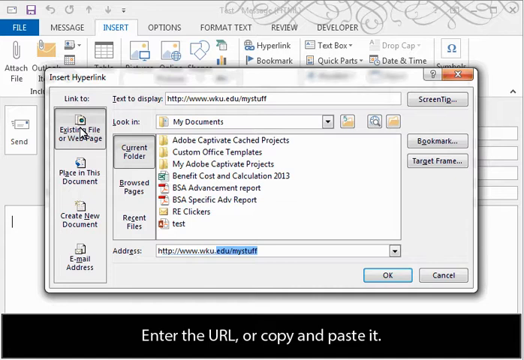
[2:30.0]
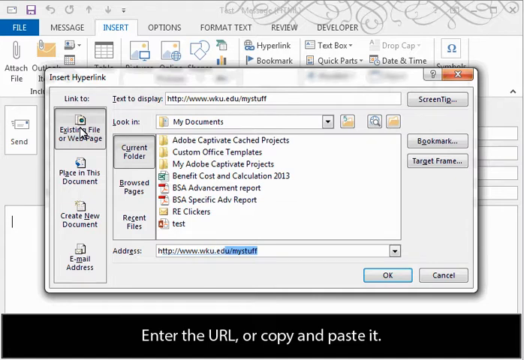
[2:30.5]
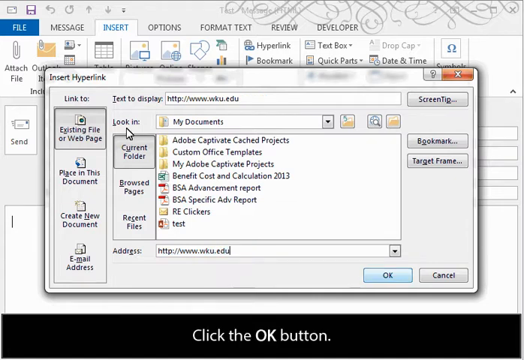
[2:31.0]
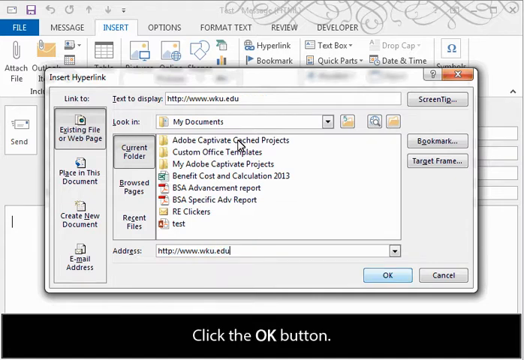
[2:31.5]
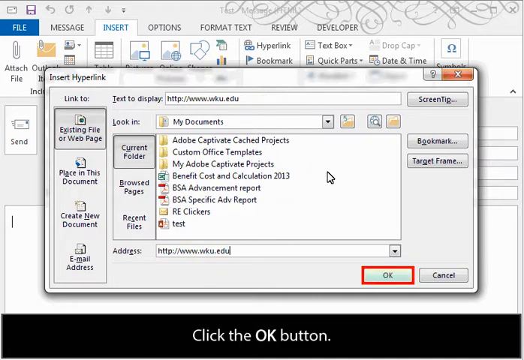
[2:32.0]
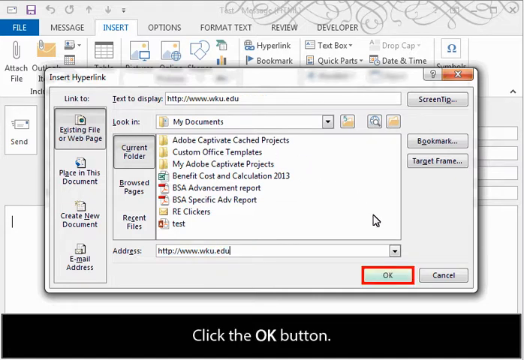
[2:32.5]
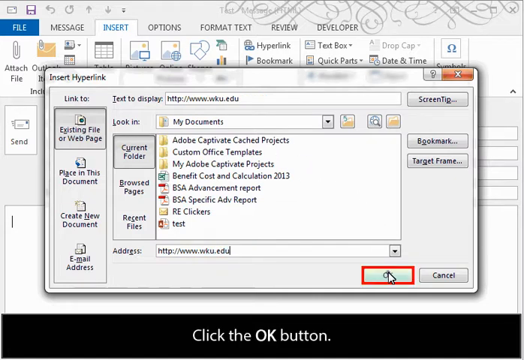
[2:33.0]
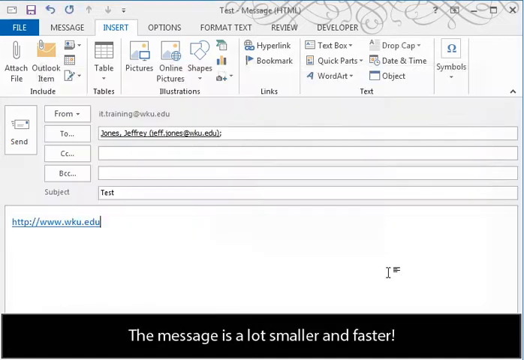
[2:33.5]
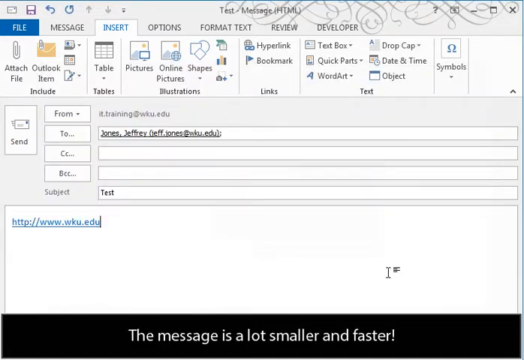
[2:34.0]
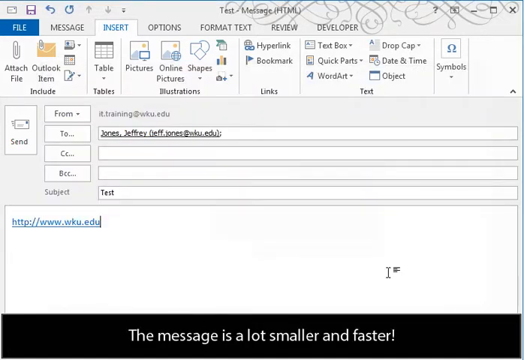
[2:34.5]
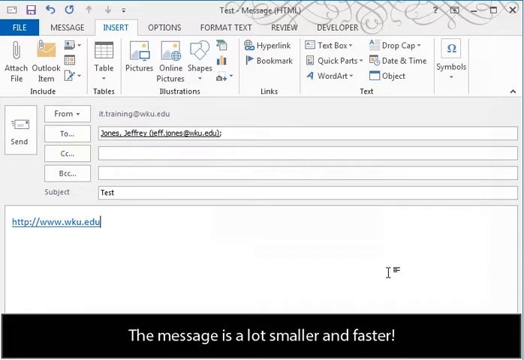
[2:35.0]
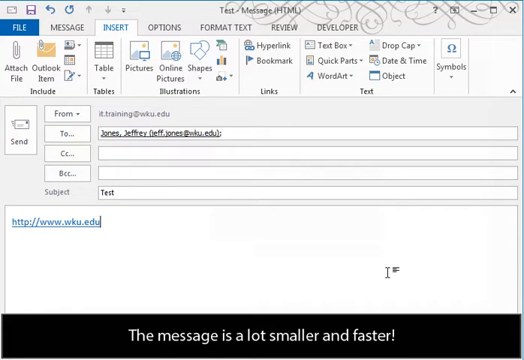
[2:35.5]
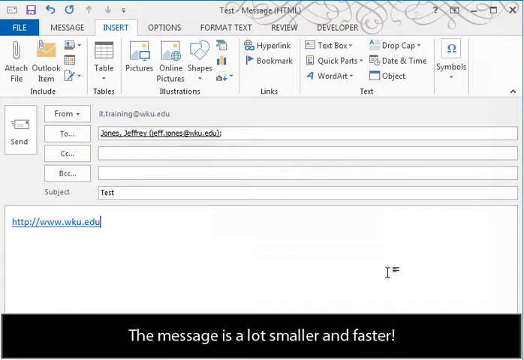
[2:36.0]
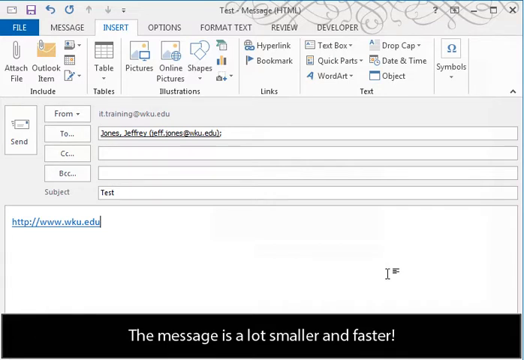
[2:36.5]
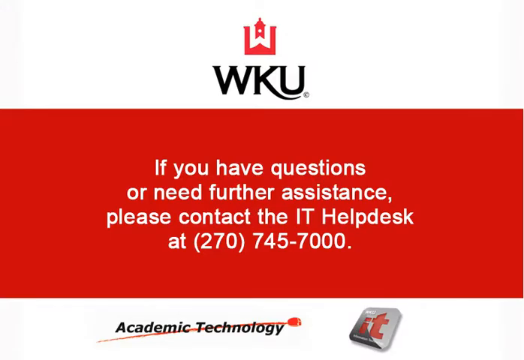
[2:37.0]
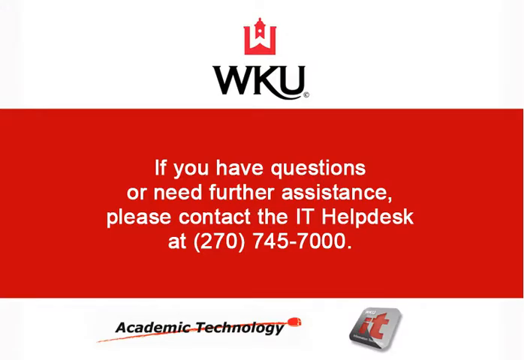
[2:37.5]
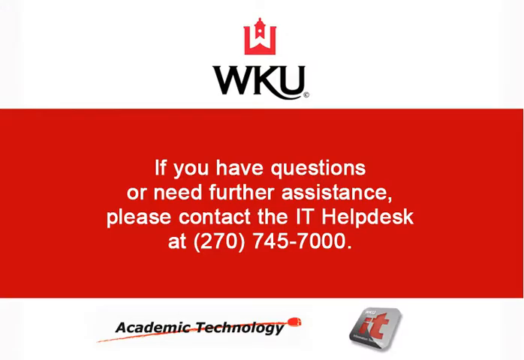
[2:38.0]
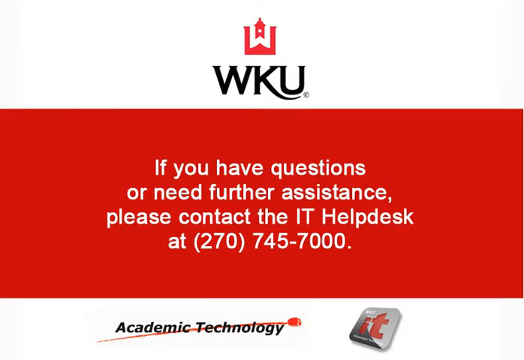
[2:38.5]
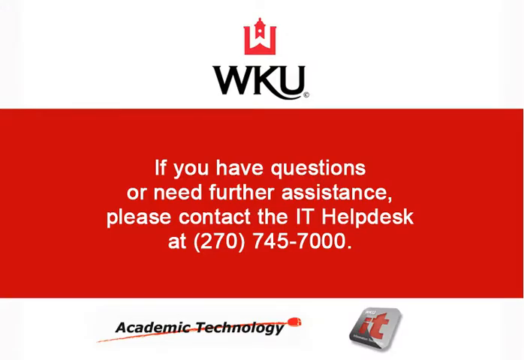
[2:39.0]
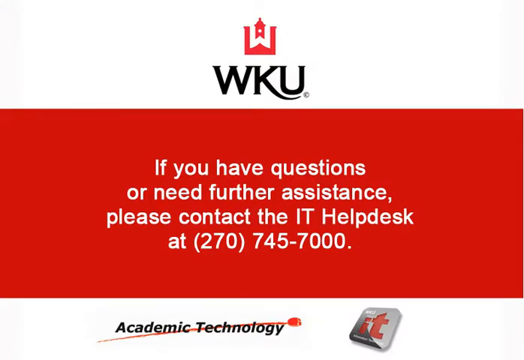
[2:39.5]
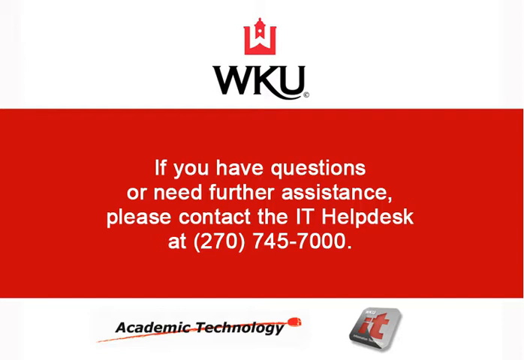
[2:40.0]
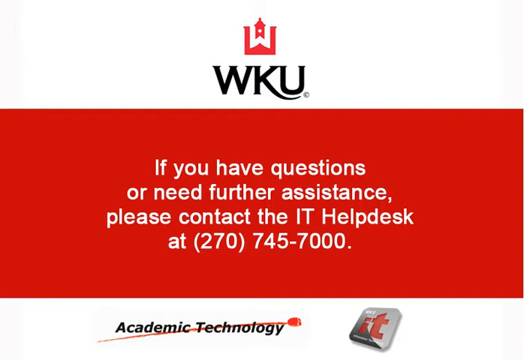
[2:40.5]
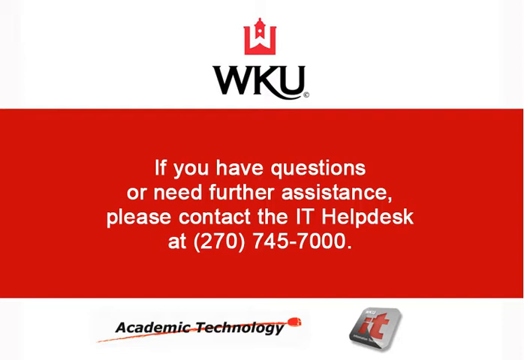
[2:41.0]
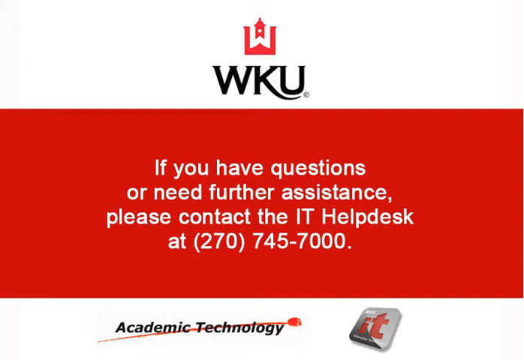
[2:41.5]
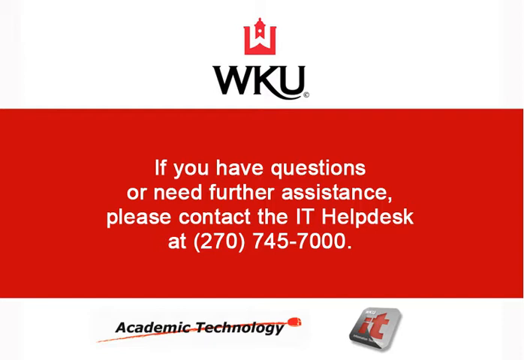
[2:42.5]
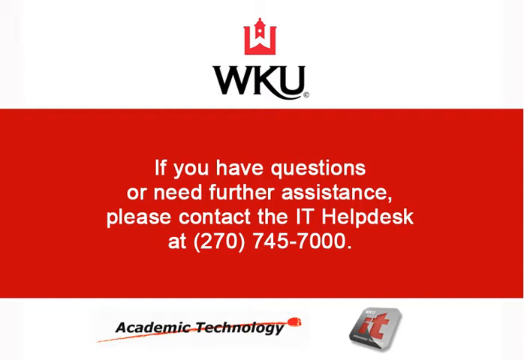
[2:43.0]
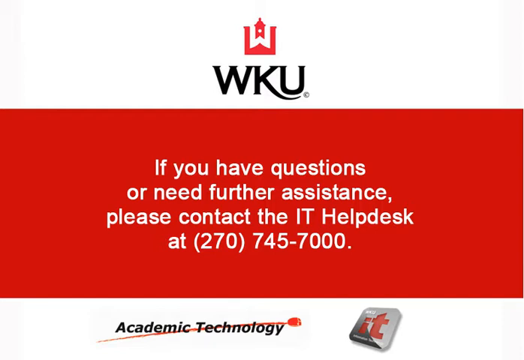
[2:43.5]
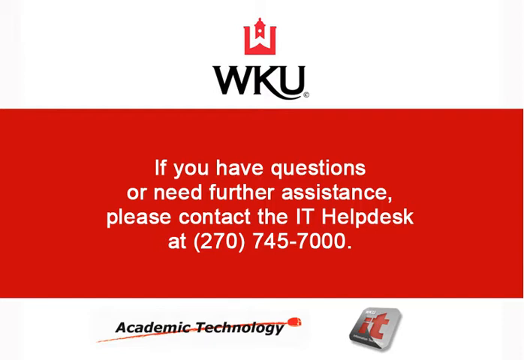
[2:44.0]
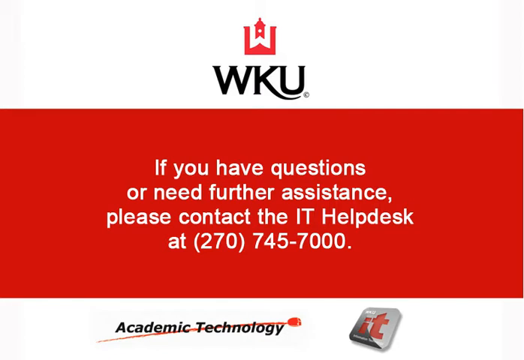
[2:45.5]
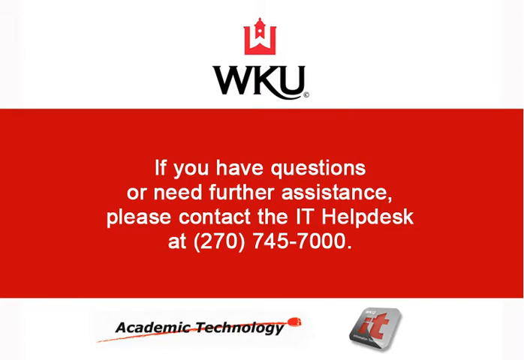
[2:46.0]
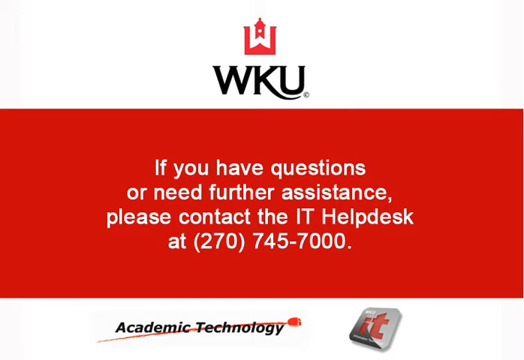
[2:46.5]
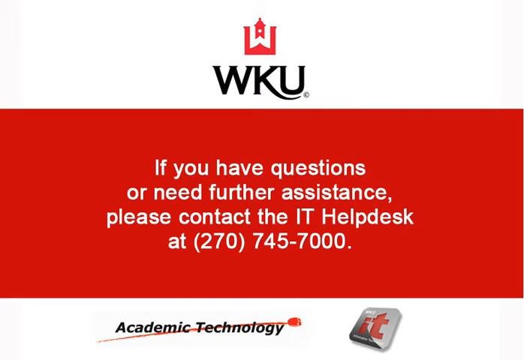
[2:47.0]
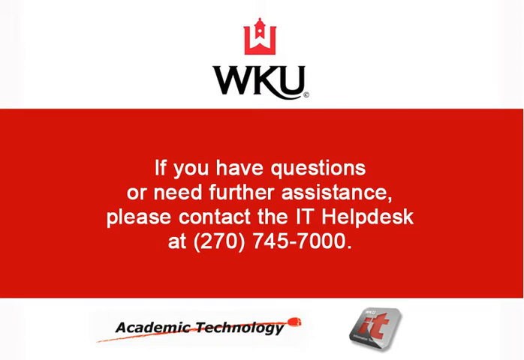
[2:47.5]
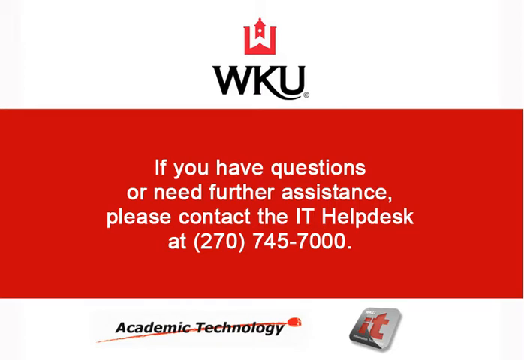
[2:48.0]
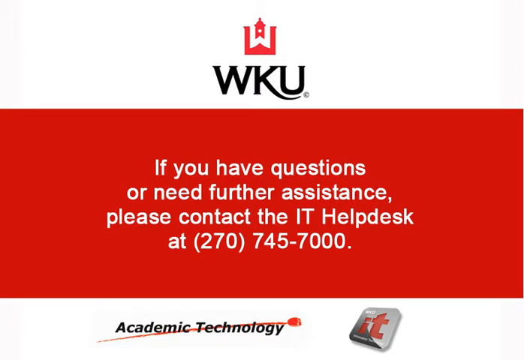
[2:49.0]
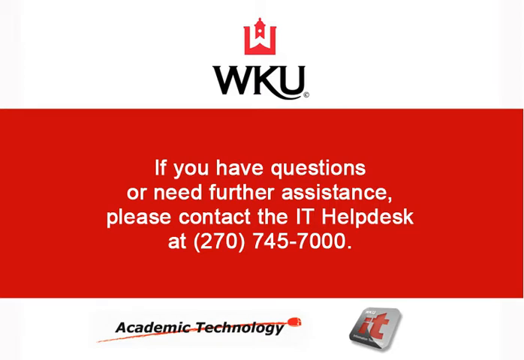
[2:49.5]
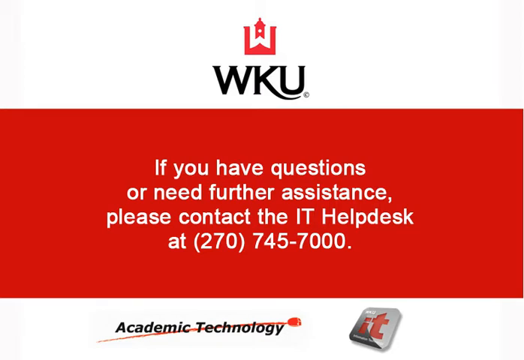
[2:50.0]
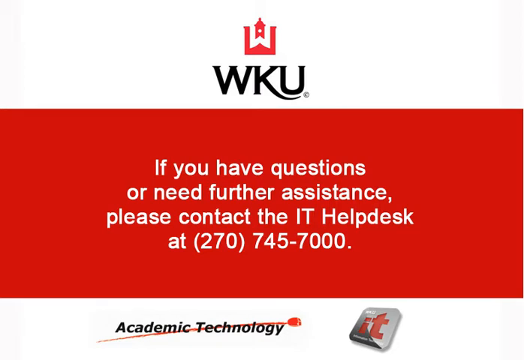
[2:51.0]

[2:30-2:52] In the open insert hyperlink window, the address bar at the bottom reads "http://www.wku.edu/my stuff." The user deletes the end of the address so that it only reads "http://www.wku.edu." The OK button below is highlighted with a red square, and the user clicks it. The view returns to the open test message, where the web address "http://www.wku.edu" has been added to the message box as a link in blue font. The ending page follows, with a white background and a red rectangular block running horizontally. At the top of the page is "WKU" with a small logo icon that kind of looks like the top of a building's clock tower. White text in the red block reads: "if you have further questions or need further assistance, please contact the IT help desk at 270-745-7000." At the bottom of the page is "Academic Technology" with a small icon next to it that looks like a silver square with "it" in red lowercase letters.